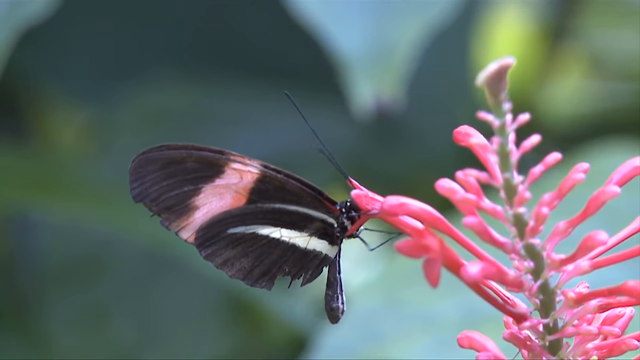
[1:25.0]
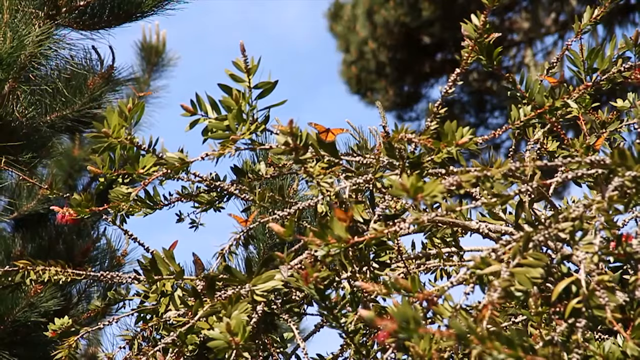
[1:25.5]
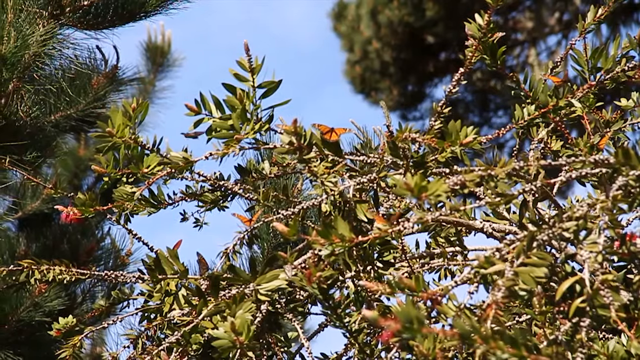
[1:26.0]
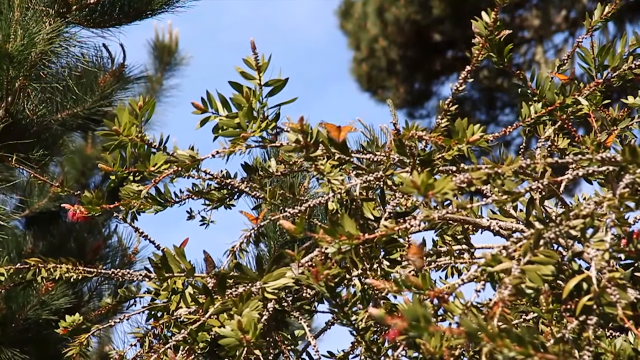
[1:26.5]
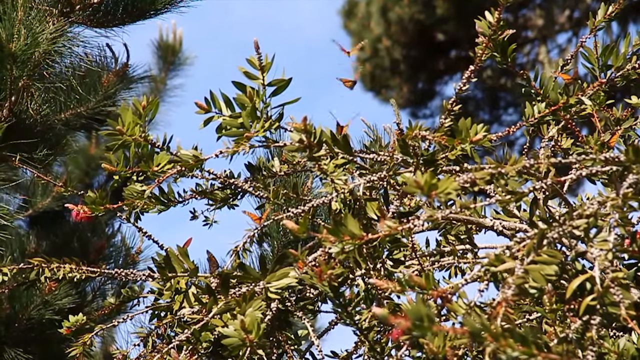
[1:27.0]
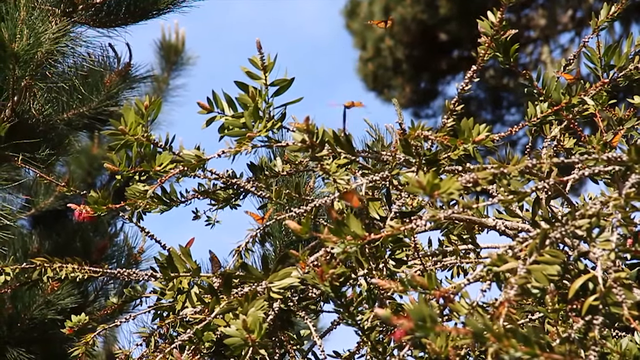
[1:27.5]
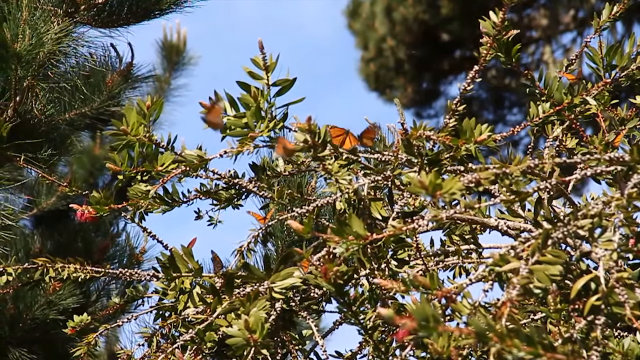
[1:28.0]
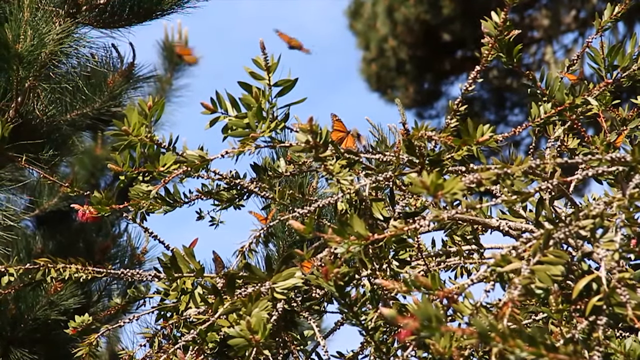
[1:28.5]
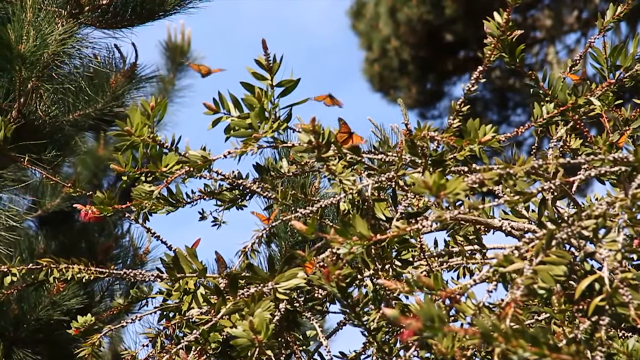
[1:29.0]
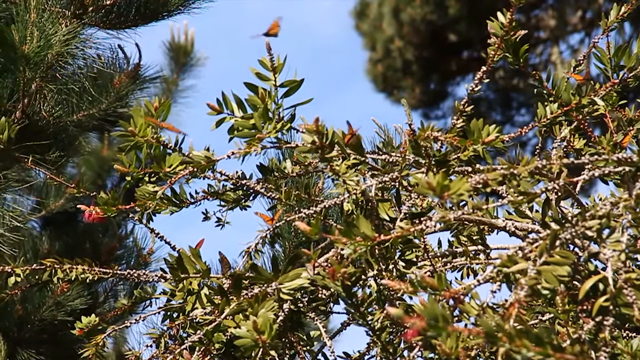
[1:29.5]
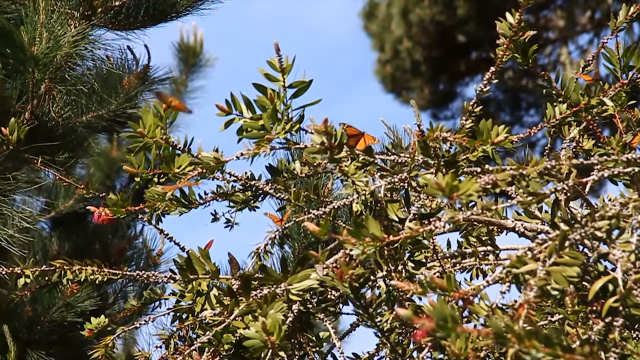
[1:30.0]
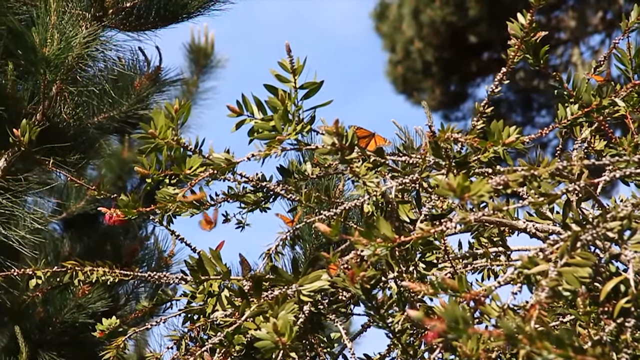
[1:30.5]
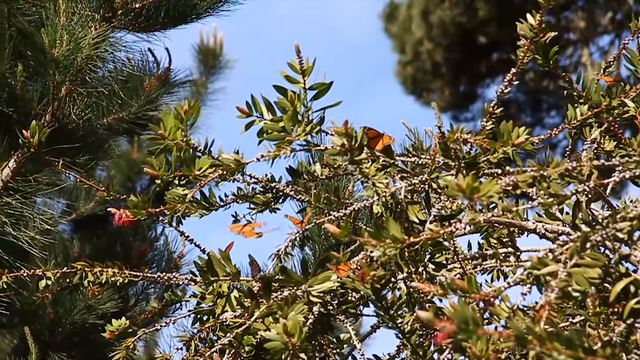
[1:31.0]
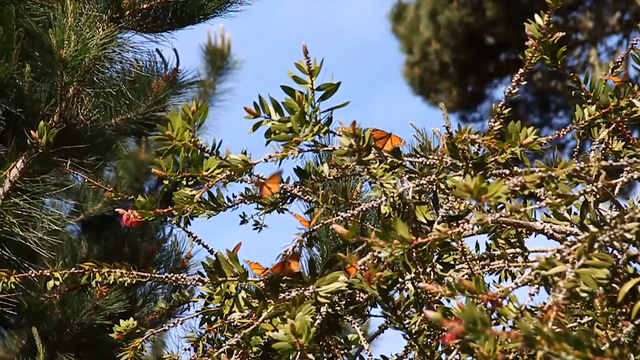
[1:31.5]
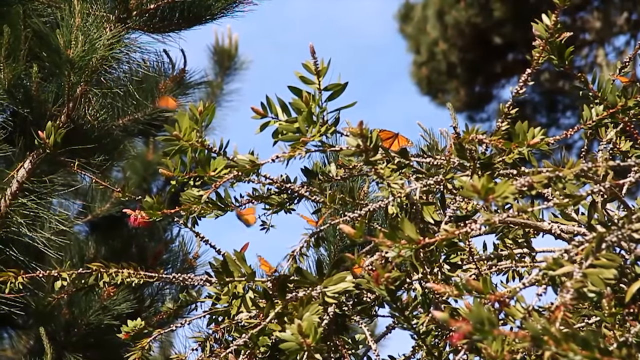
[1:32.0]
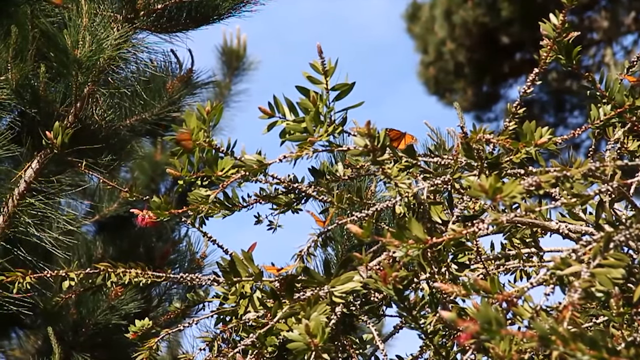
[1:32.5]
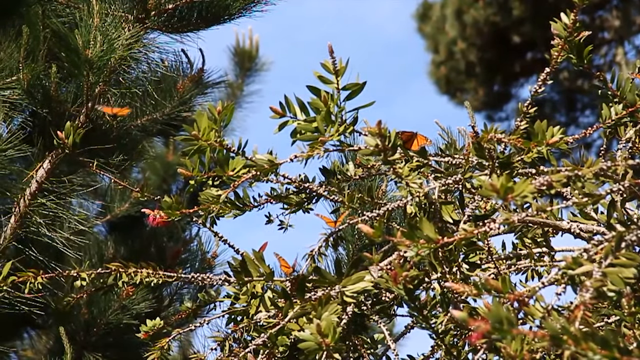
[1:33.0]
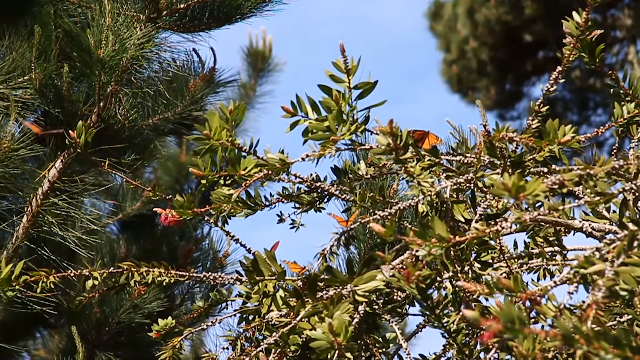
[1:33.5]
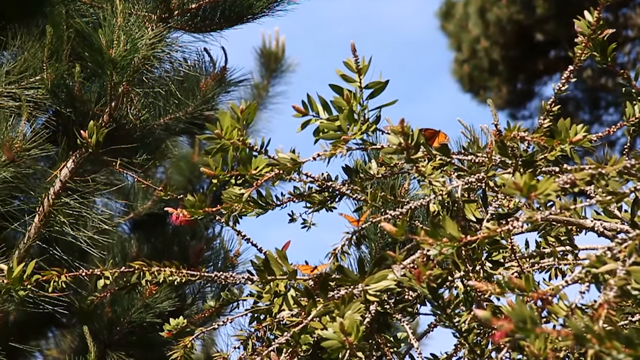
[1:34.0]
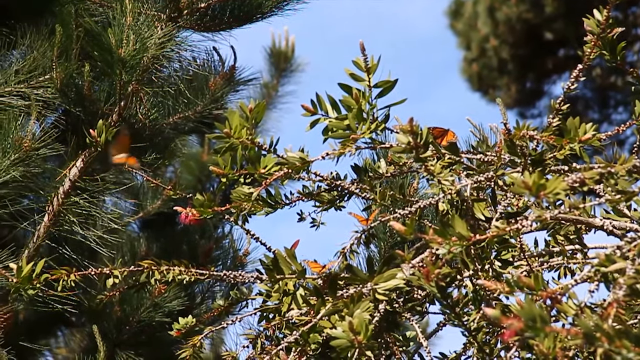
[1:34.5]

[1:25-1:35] The white lettering above reads "Butterflies, fun butterfly facts for kids." On the left side is a yellow circle with a green circle inside, and in the center of that is an orange tiger with black and white stripes. Against a fuzzy green and grayish background, a black and pink lined butterfly with a white strip just underneath it is on top of some pink petals and a green stem. Next, yellow butterflies fly around green trees and green leaves, settling on top of the branches and bouncing from one branch to another, with blue sky behind them. The branches are brown and a bit jagged.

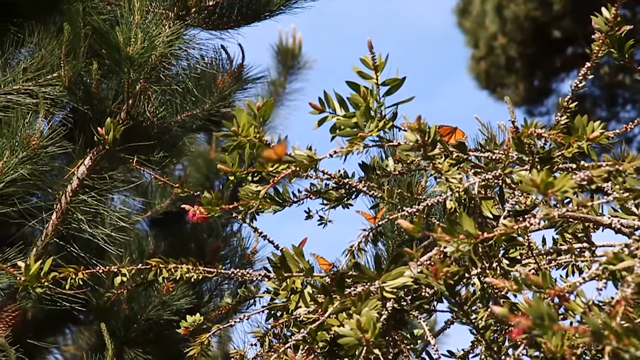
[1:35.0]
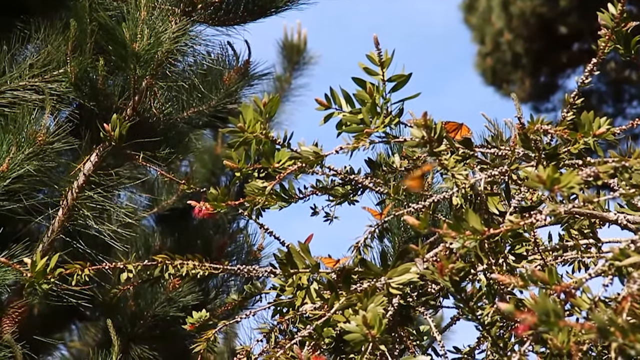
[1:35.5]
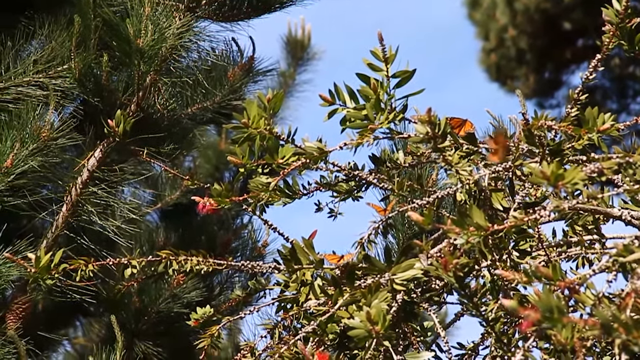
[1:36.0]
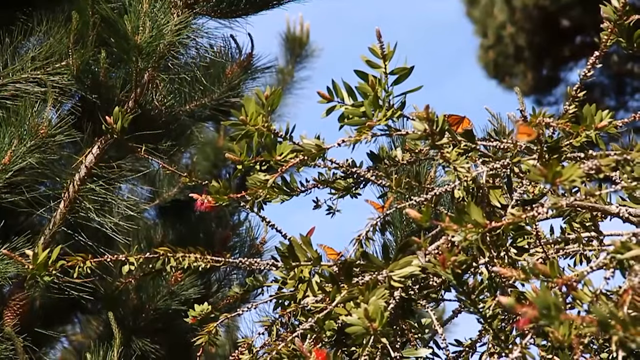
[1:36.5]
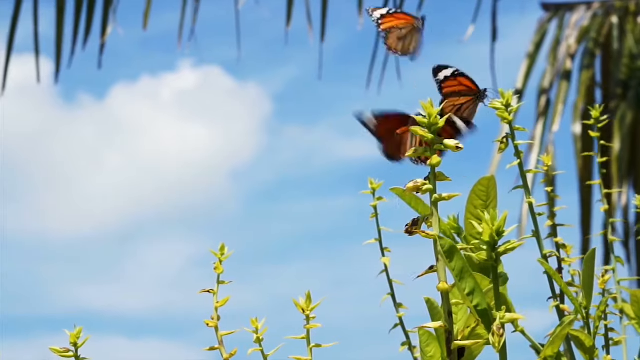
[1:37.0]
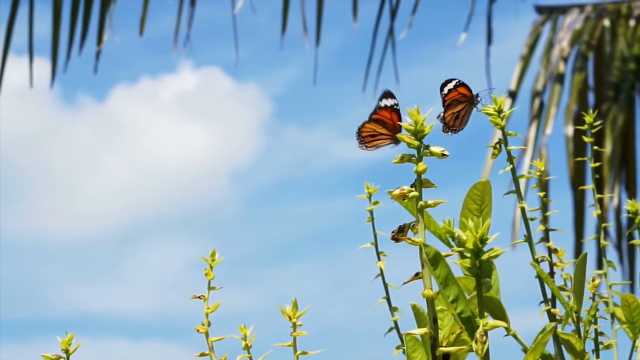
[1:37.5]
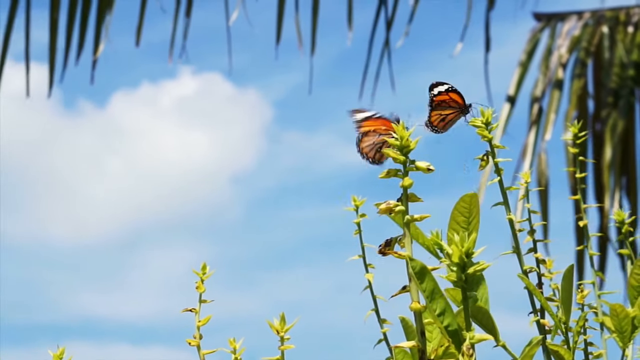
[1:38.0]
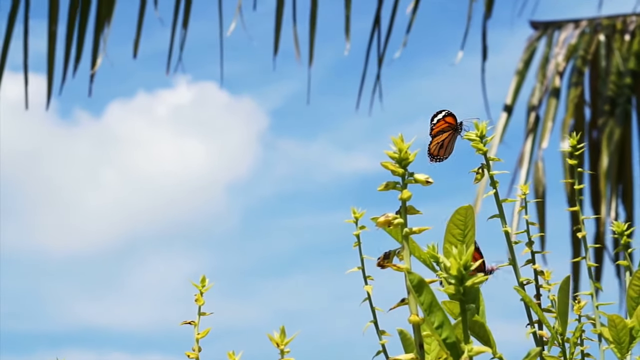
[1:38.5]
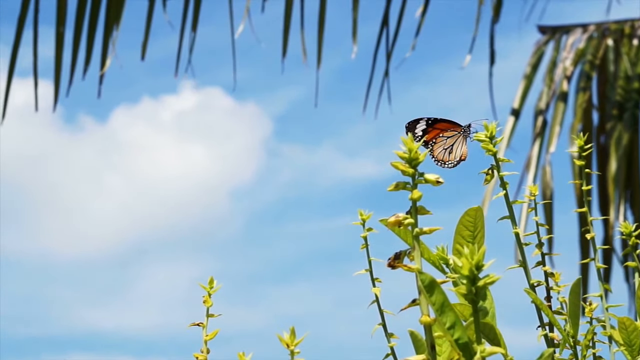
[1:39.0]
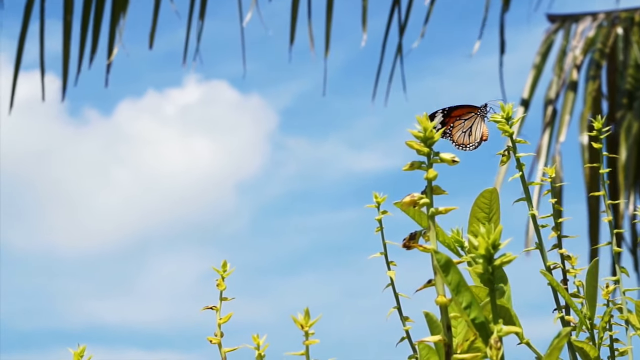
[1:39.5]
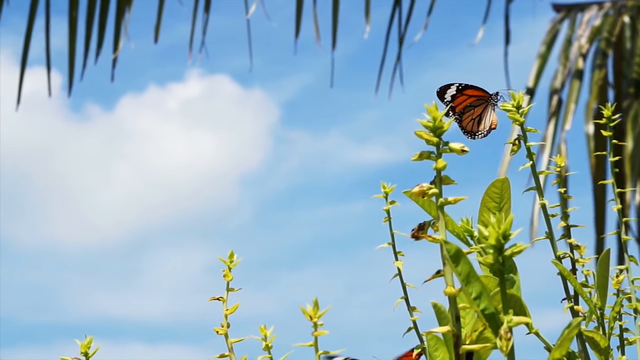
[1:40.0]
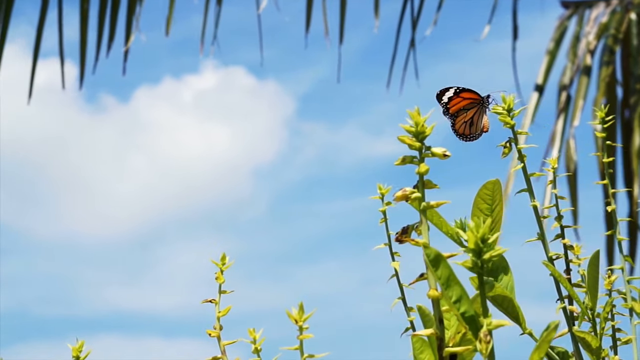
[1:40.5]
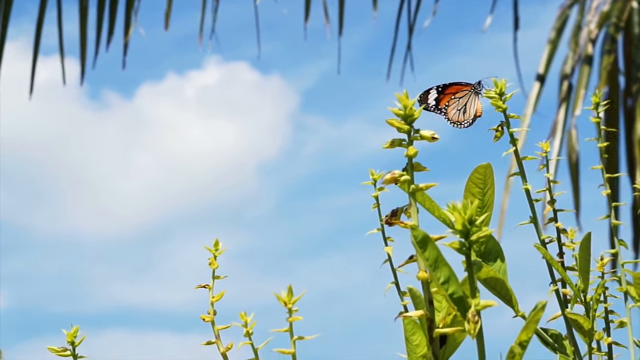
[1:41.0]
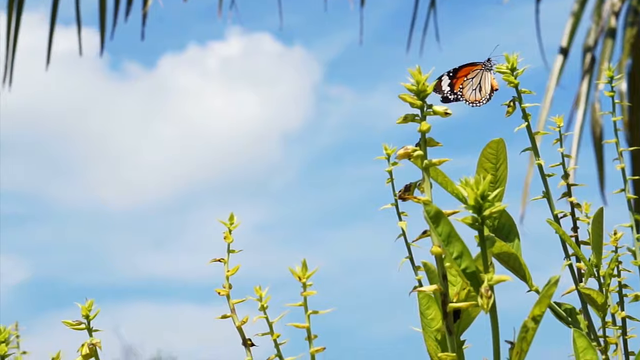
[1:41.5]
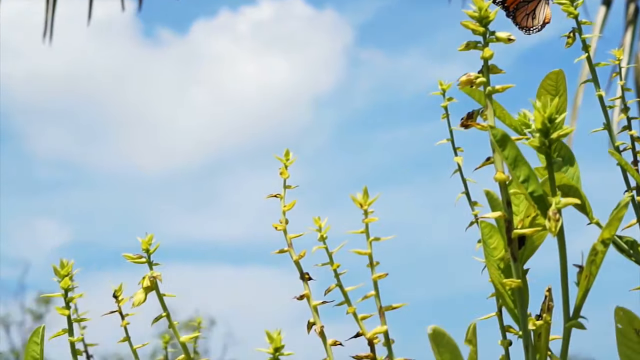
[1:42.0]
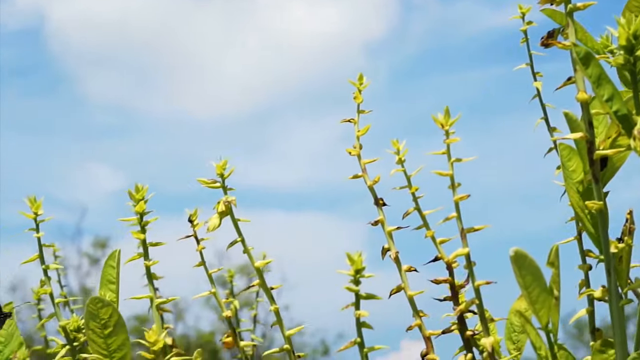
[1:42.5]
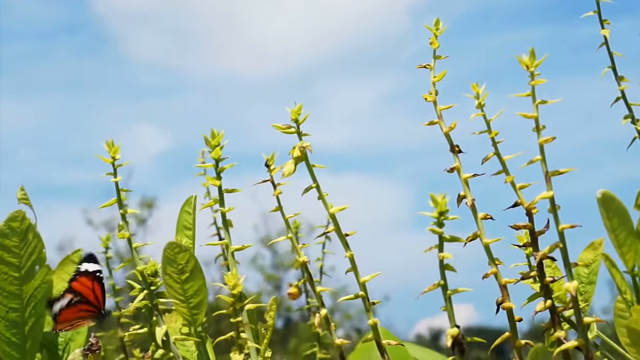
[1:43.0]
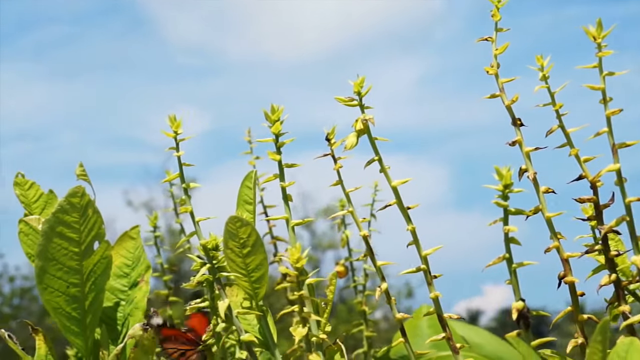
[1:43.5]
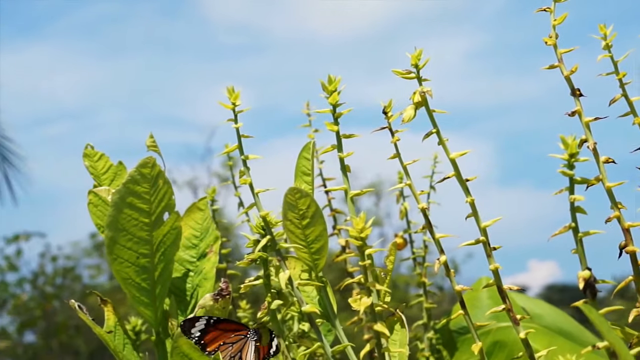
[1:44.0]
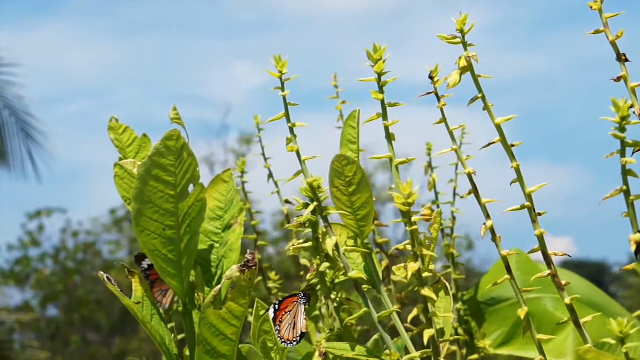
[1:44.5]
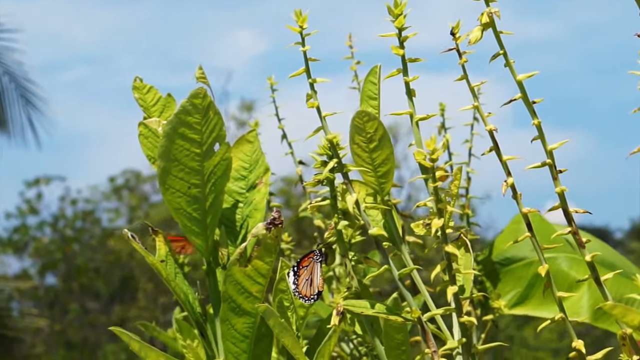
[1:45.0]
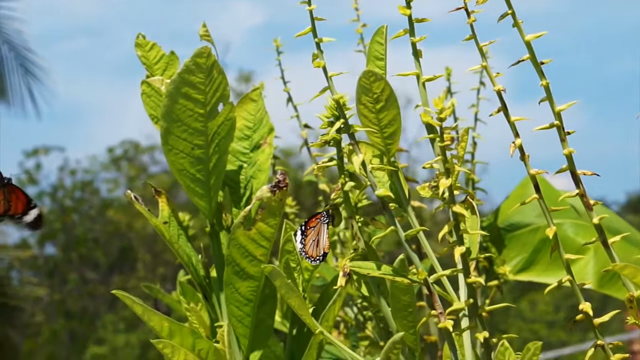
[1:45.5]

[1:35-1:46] The white lettering at the top reads "Butterflies, fun butterfly facts for kids." To the left of it is a yellow circle within a green circle, and at the very center is an orange tiger with black and white stripes around its face. Against a blue sky background and green trees, orange and black striped butterflies fly from branch to branch. The camera zooms in, showing white clouds on the left, blue sky to the right, green branches and leaves, and what look like yellow spiked branches. The butterflies are orange and black striped with a bit of white striping over the very top. The camera pans down to another butterfly resting on a branch.